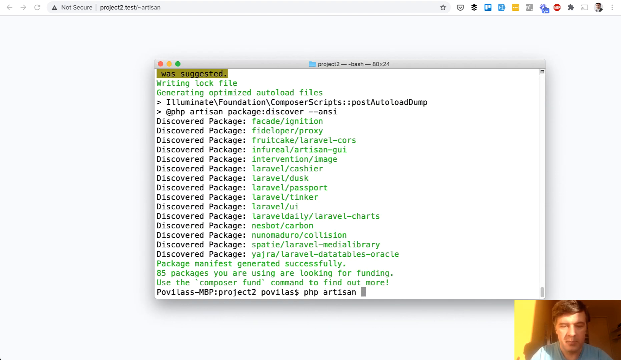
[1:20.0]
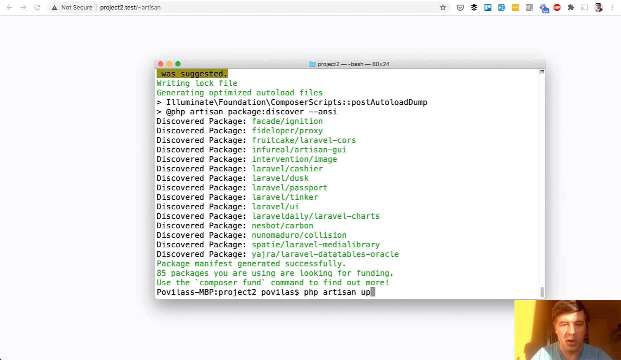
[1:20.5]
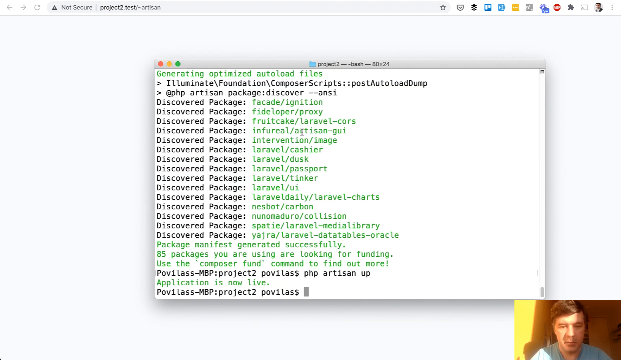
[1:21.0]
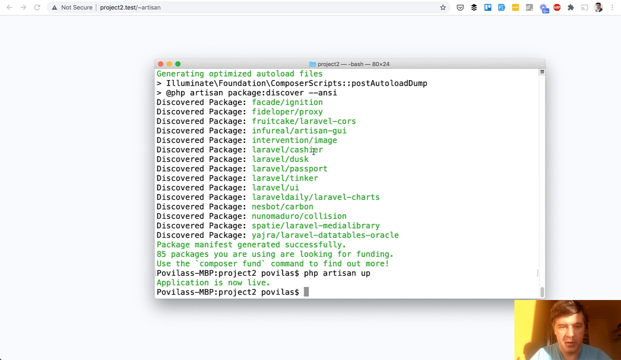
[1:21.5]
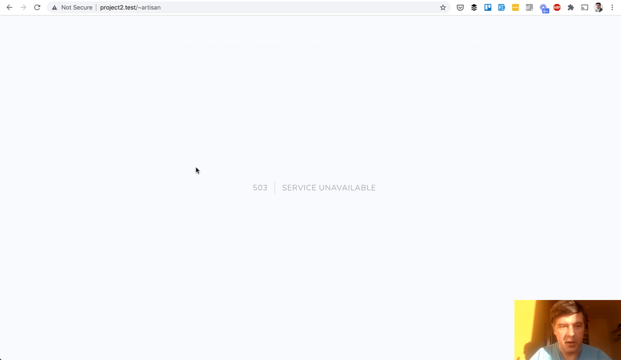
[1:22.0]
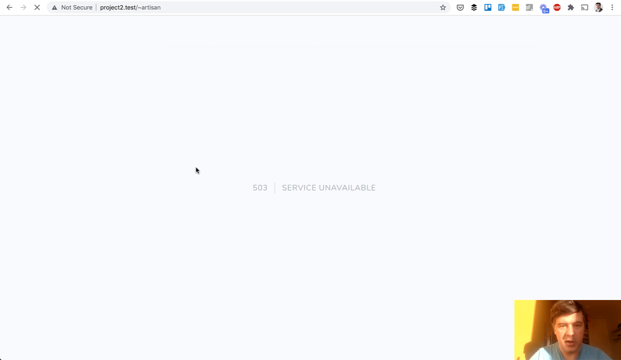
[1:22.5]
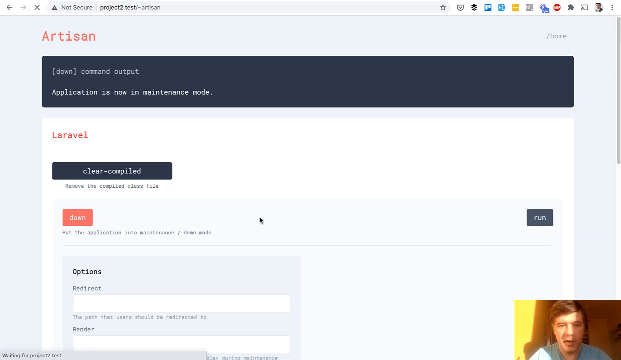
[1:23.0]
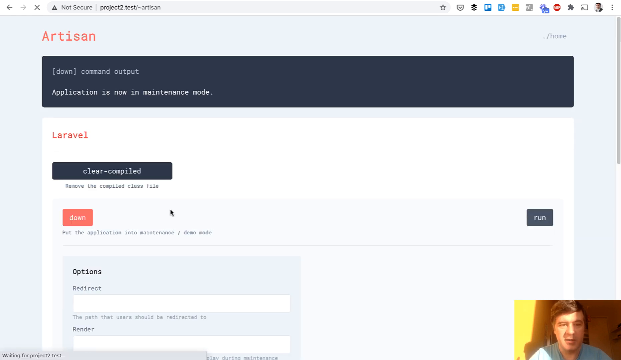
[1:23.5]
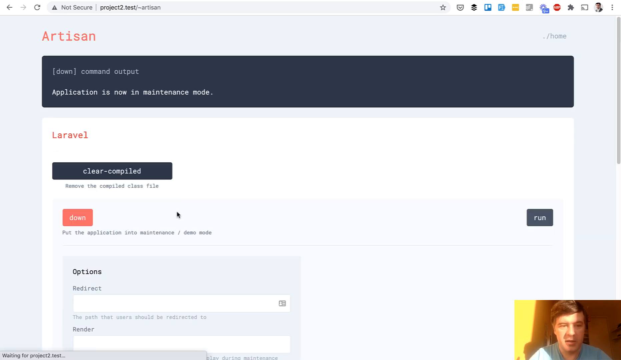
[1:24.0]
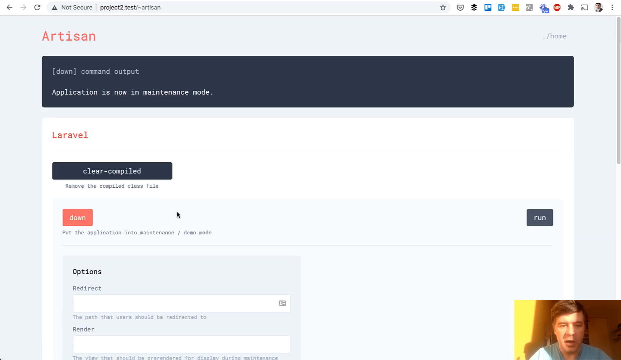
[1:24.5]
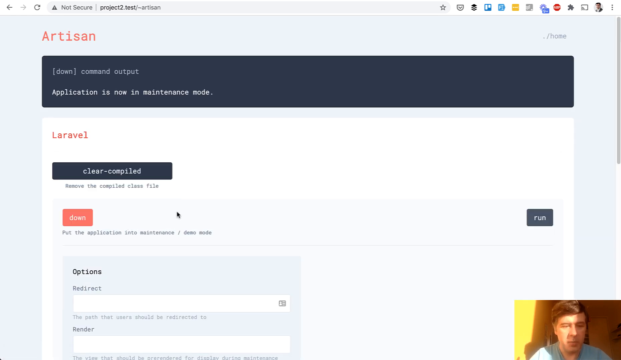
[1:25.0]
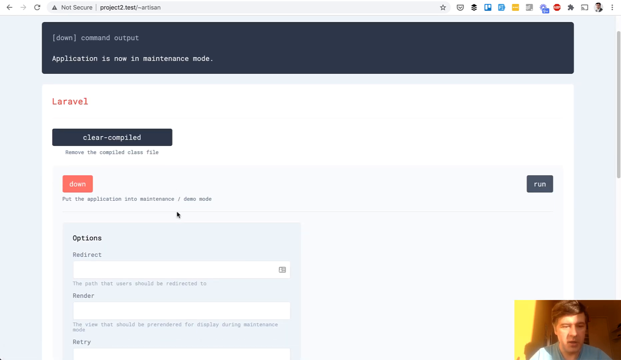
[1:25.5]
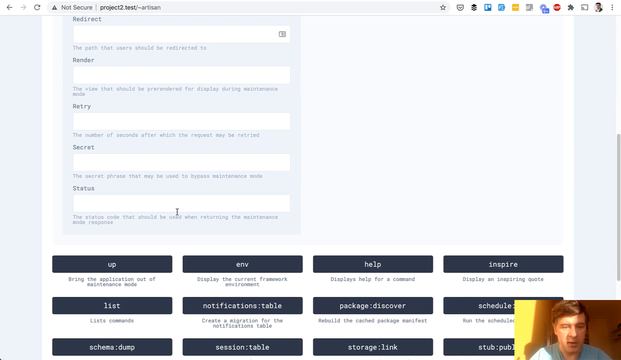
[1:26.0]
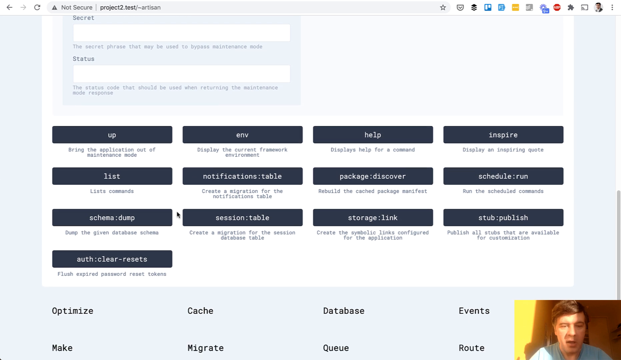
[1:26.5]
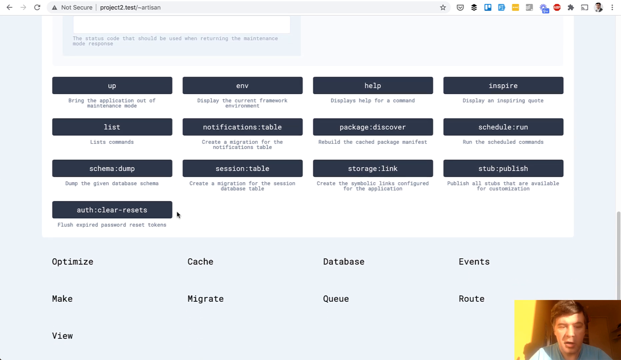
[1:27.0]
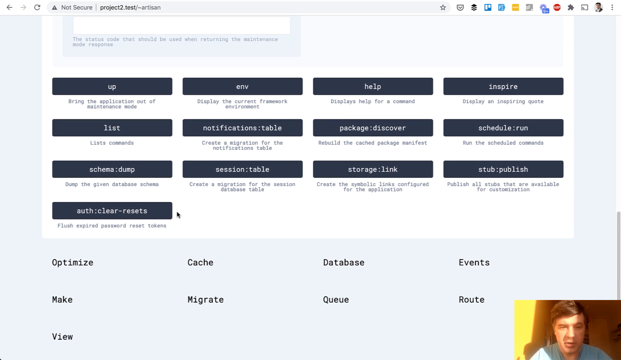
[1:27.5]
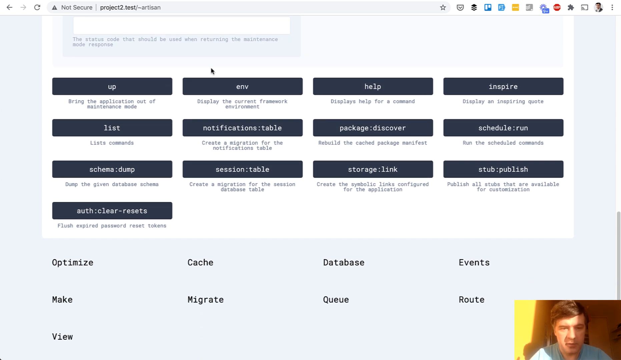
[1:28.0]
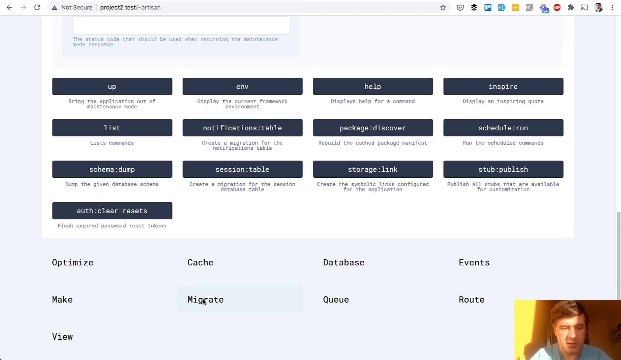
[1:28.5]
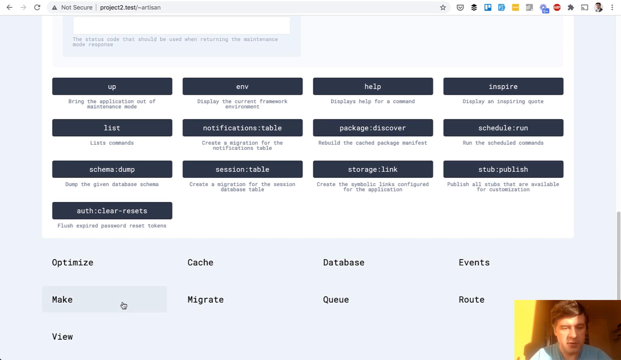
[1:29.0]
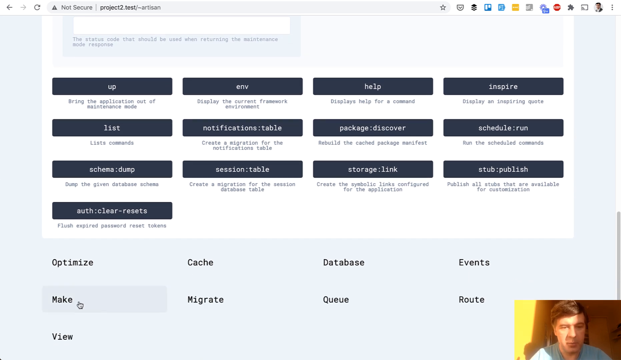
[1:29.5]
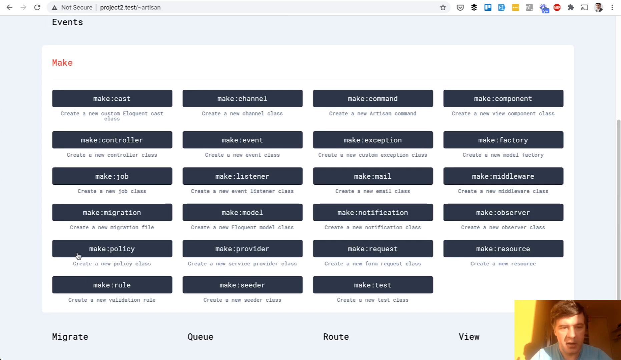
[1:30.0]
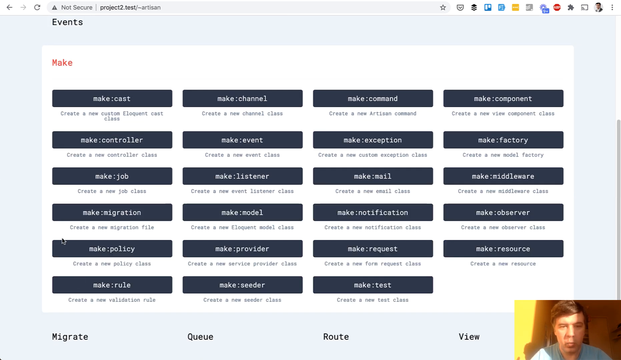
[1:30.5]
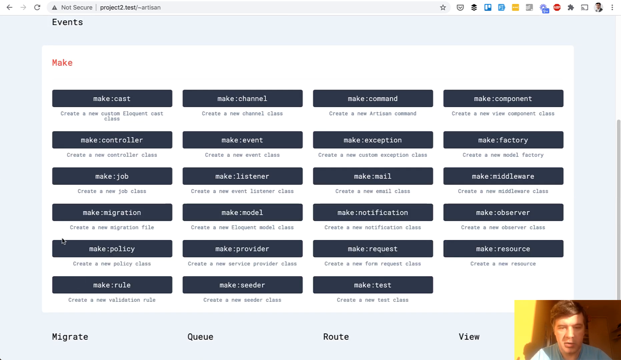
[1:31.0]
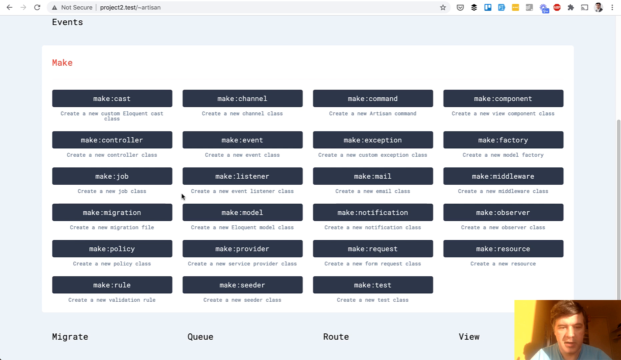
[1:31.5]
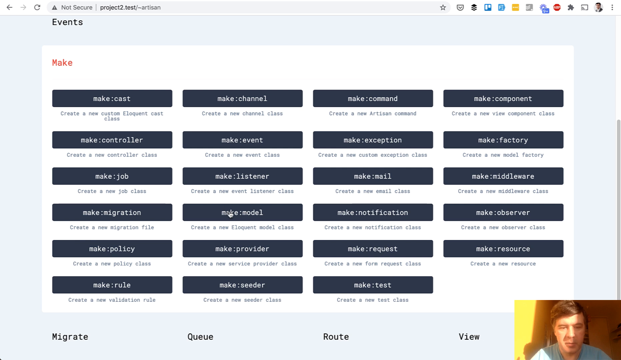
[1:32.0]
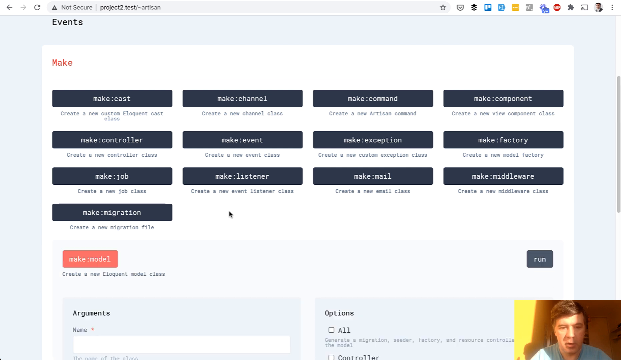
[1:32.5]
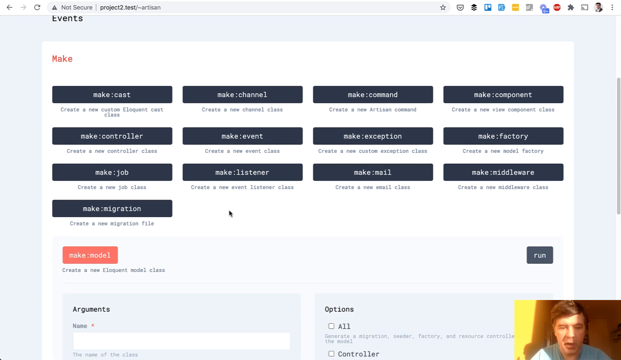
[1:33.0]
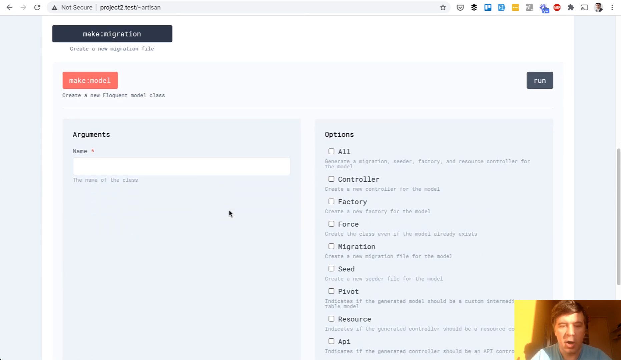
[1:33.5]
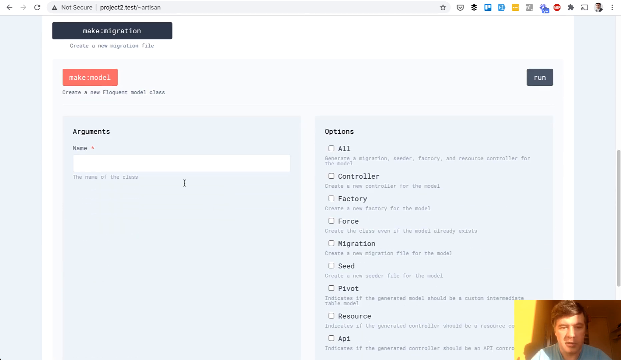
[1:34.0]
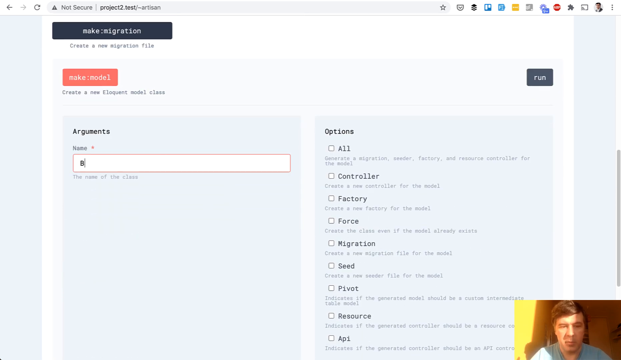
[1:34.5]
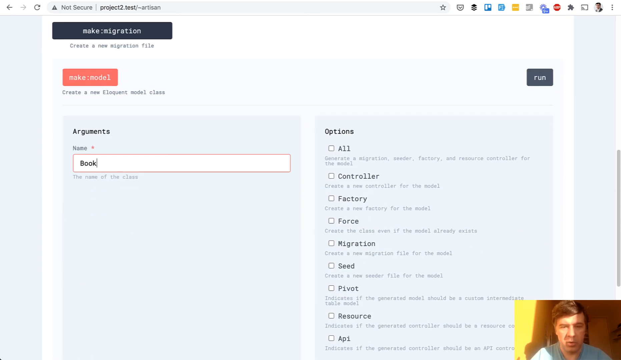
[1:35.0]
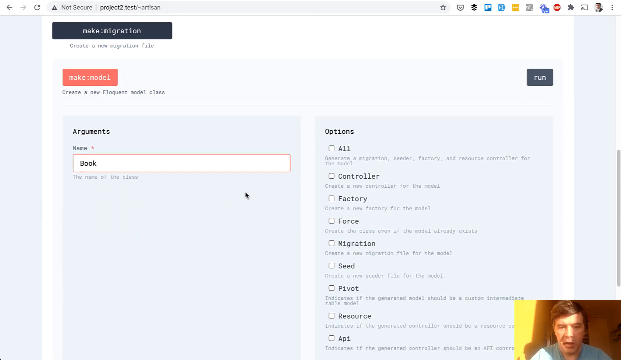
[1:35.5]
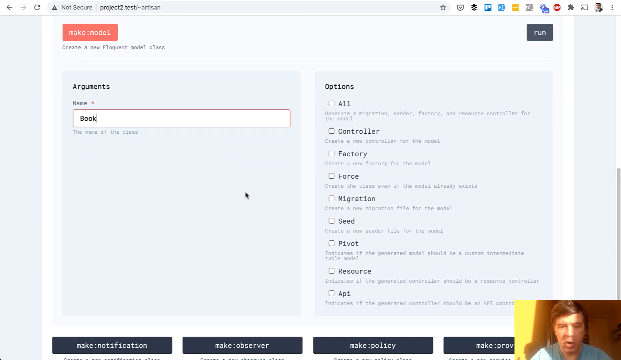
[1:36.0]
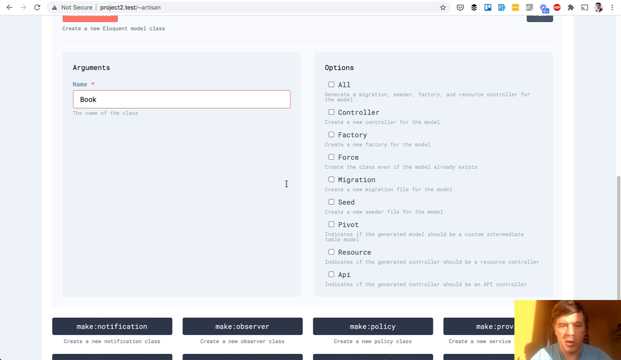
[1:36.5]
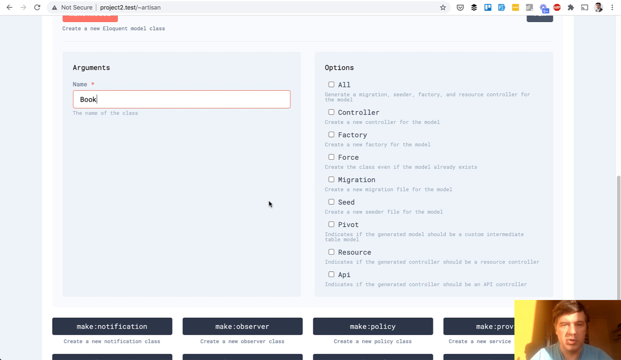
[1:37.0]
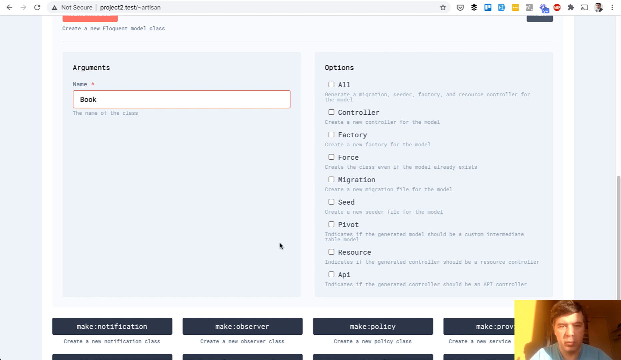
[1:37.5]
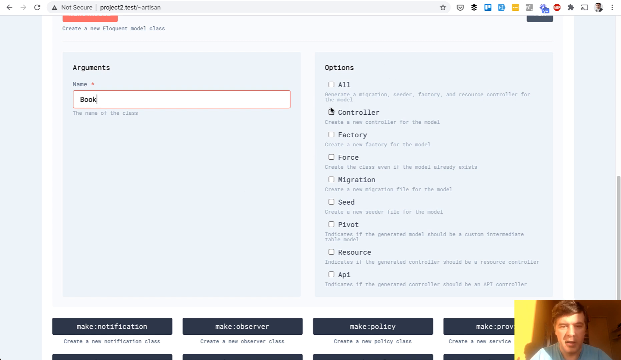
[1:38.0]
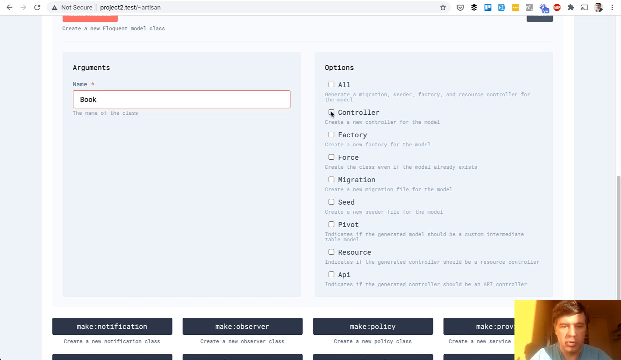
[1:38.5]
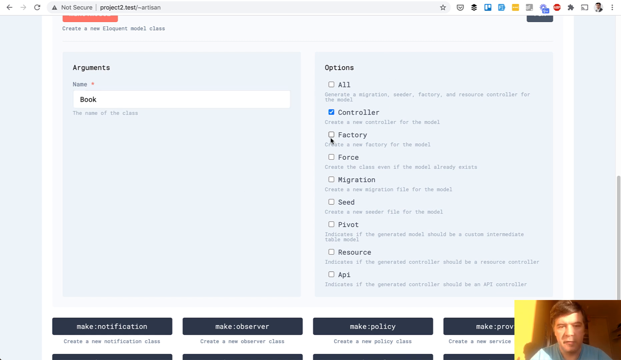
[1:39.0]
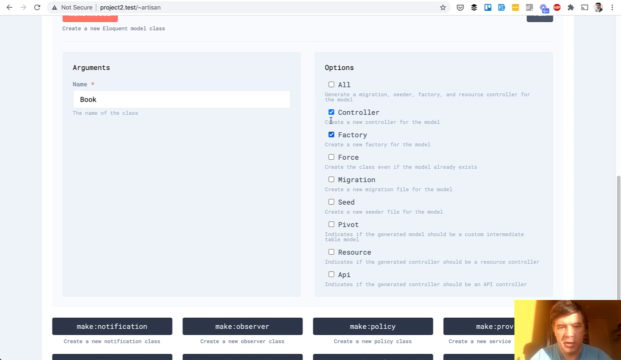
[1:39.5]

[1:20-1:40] A webpage shows "write and log file," "generate and optimize autoload files" and "discovered package." The man with brunette hair and a light blue shirt is at the bottom of the screen, with sunlight coming into the room, showing it is daytime. He is then on a page titled "artisan" that says "application is now in maintenance mode." He scrolls down to a button called "Make," which lists options such as "Make Cast," "Make Channel" and "Make Command." Scrolling down again to the arguments, he types the name "book" into a name box, then under the options clicks the box for controller, making a book controller.